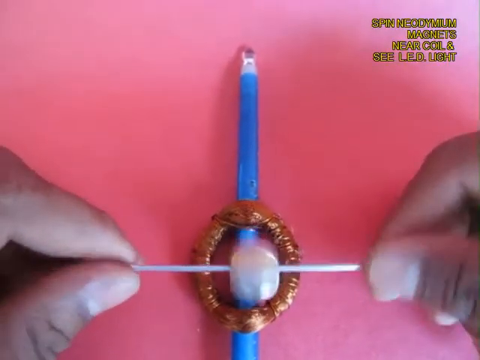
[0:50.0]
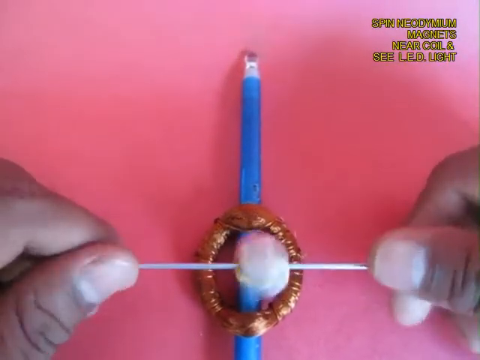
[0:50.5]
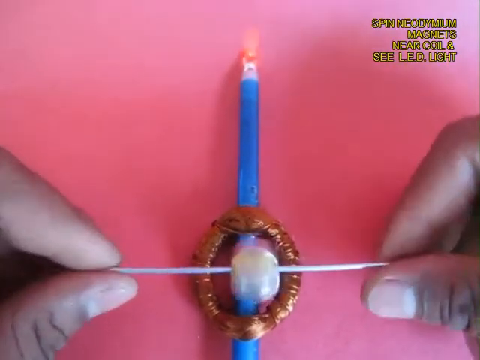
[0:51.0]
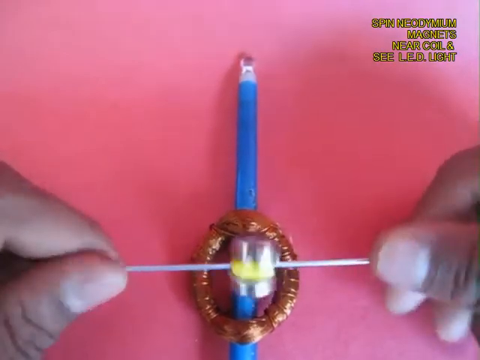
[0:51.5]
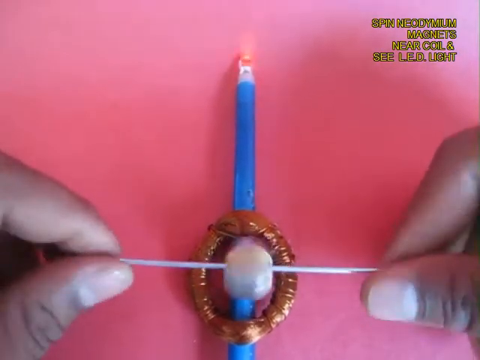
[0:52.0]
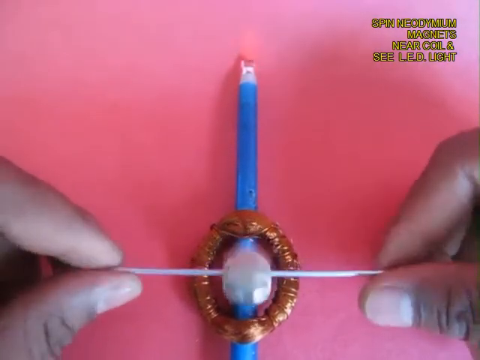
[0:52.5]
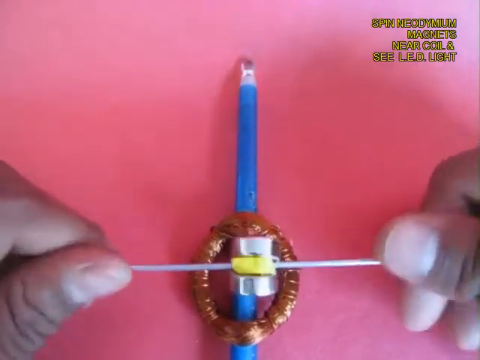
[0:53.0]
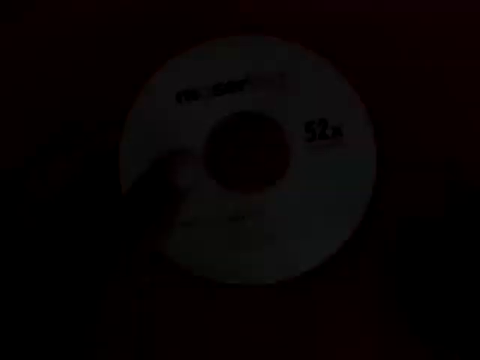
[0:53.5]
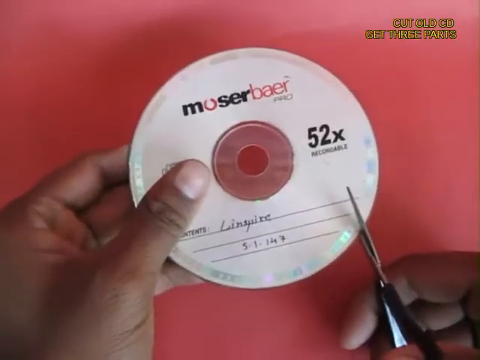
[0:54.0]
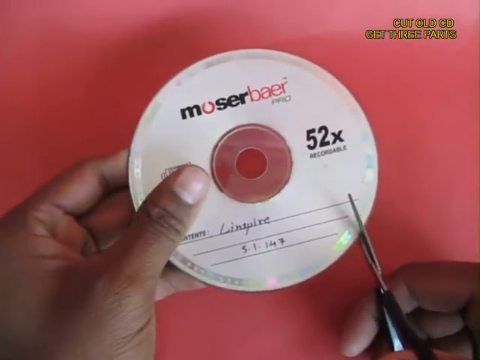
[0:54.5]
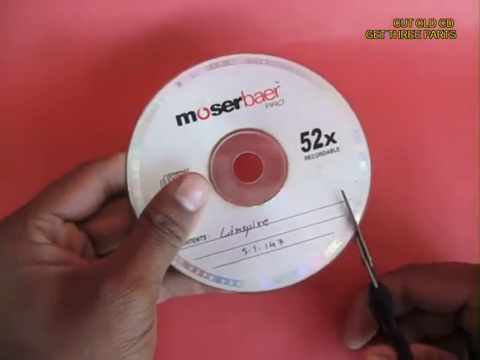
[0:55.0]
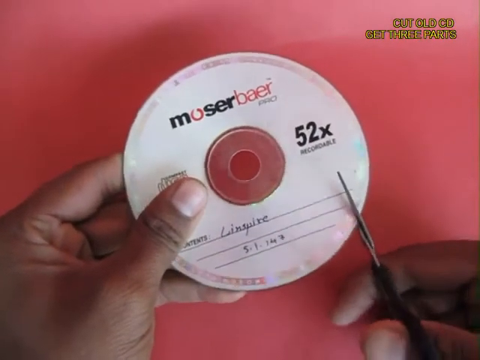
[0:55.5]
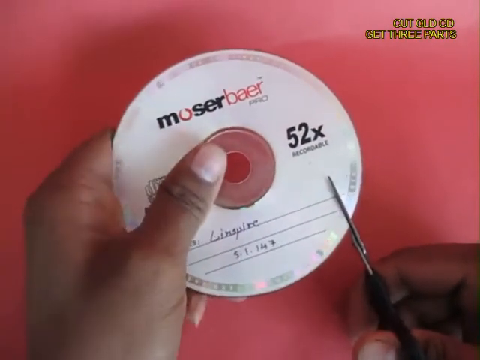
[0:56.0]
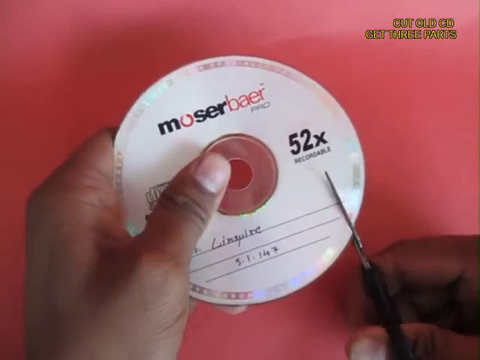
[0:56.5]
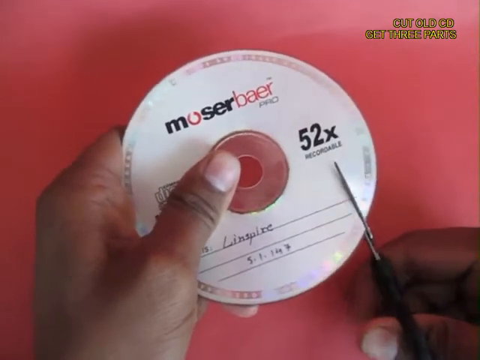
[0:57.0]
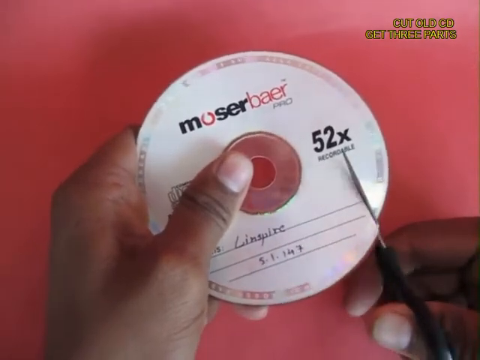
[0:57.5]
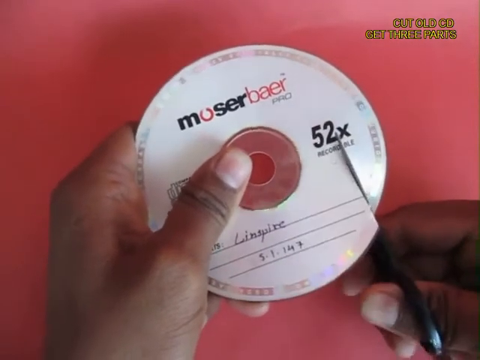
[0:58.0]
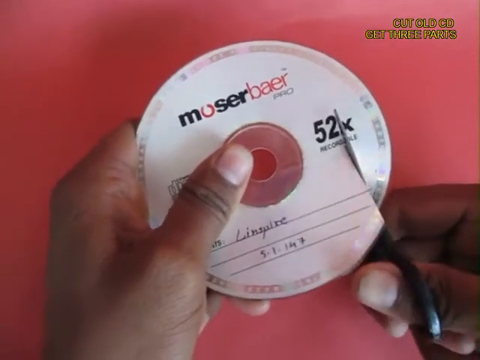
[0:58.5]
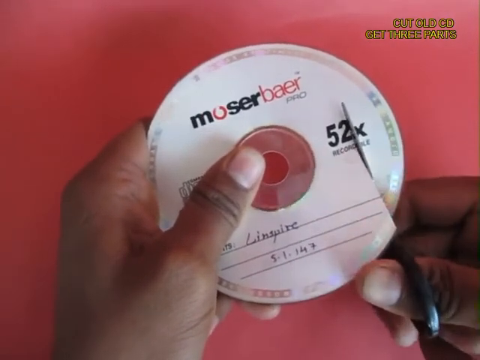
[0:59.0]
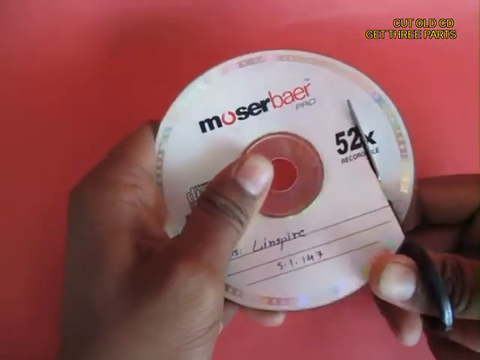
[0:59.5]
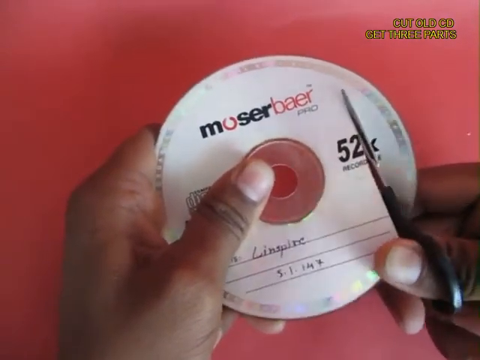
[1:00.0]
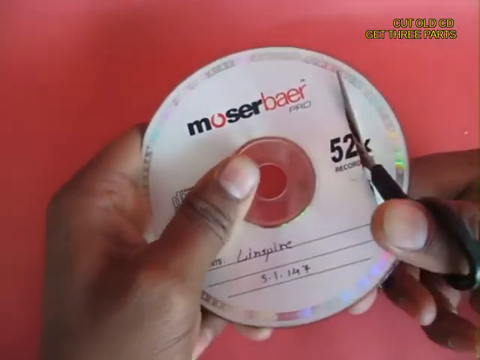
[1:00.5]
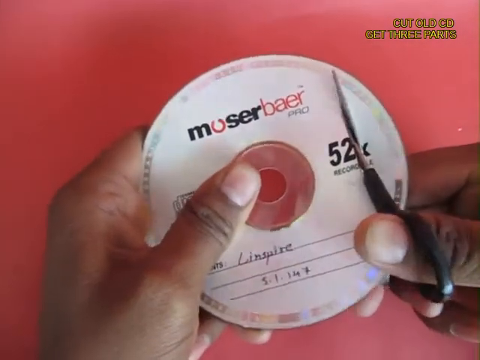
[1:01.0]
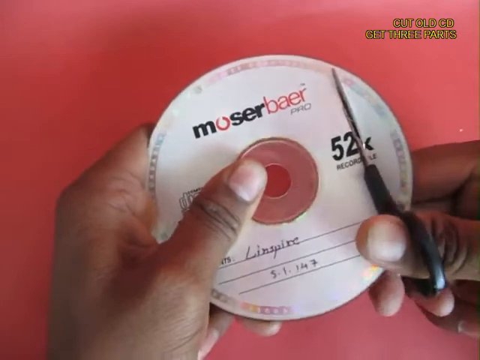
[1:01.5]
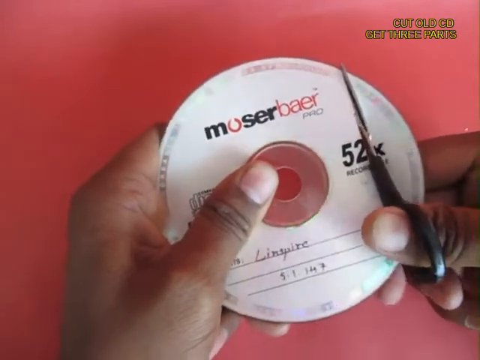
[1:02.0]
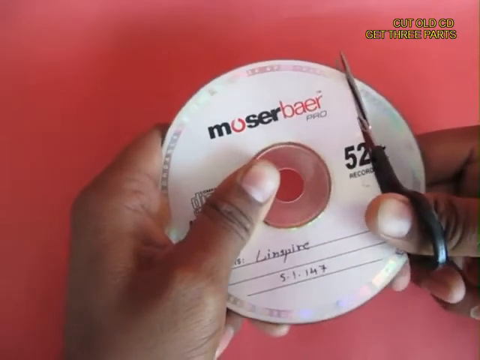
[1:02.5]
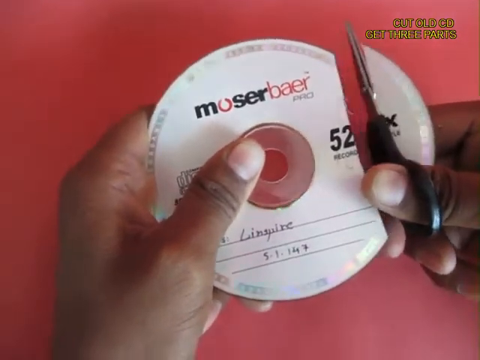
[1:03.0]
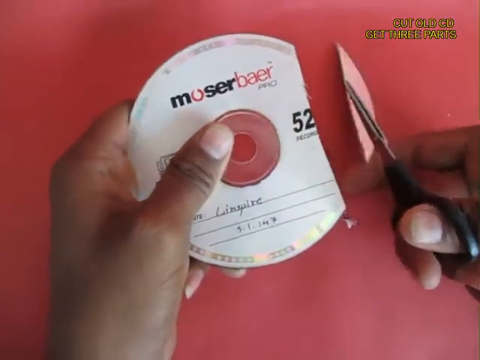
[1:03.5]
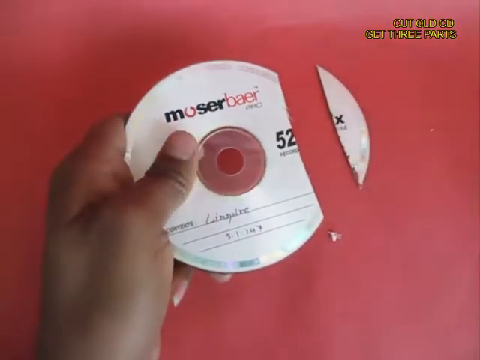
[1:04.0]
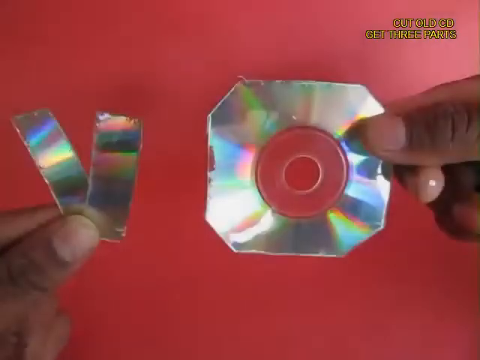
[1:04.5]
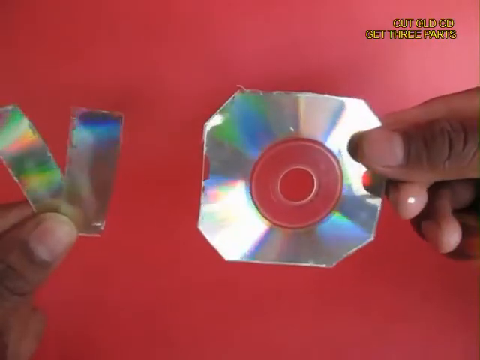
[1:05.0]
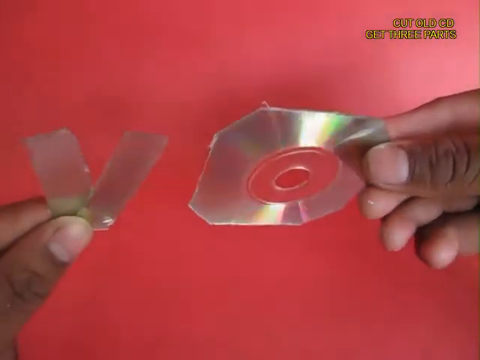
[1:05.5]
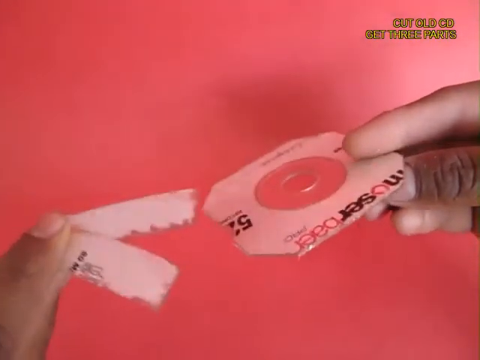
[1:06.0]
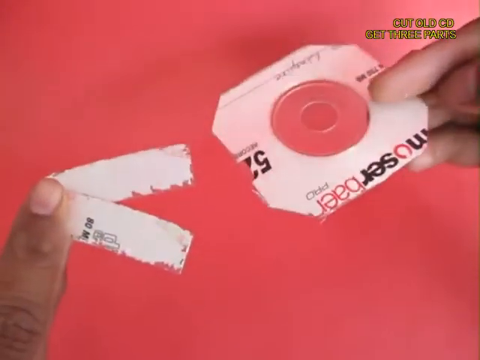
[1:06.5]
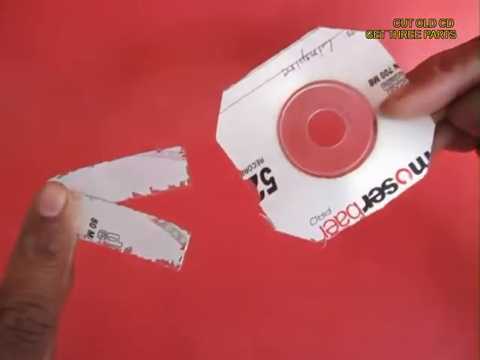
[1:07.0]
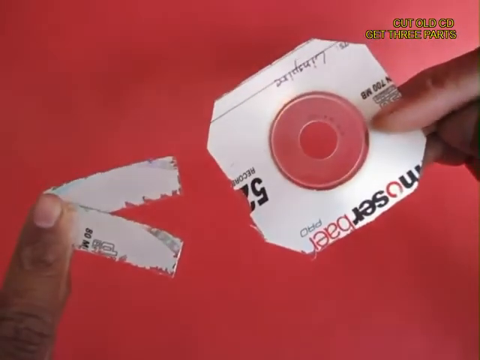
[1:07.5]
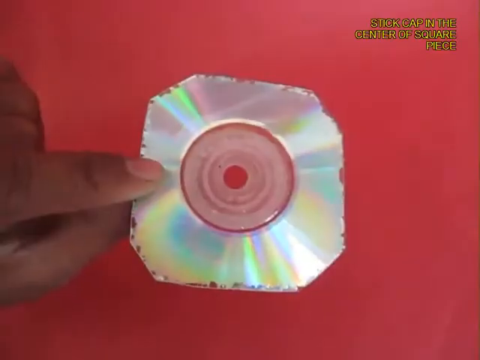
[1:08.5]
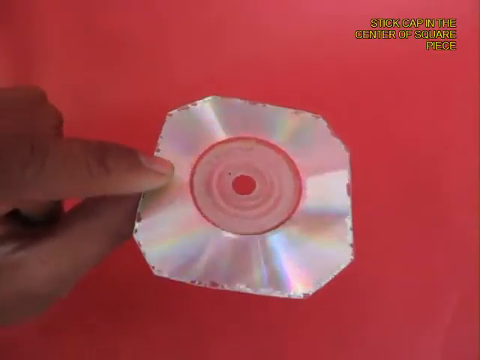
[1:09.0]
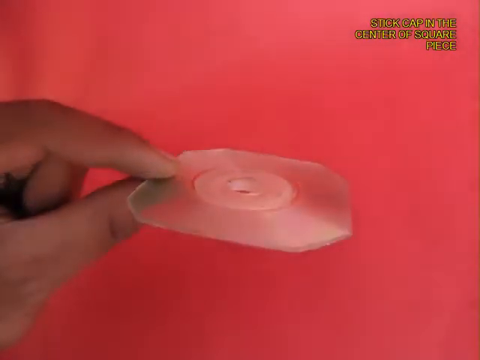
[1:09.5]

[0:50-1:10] The person continues twirling the neodymium magnets back and forth with both hands. The scene transitions to them cutting up an old CD, holding the CD in the left hand and a pair of small scissors in the right. Cutting upward with the right hand, they cut the CD and a piece falls down. In the next shot the old CD has been cut into a square shape; the left hand holds two extra pieces of CD and the right hand holds the major part of the CD.